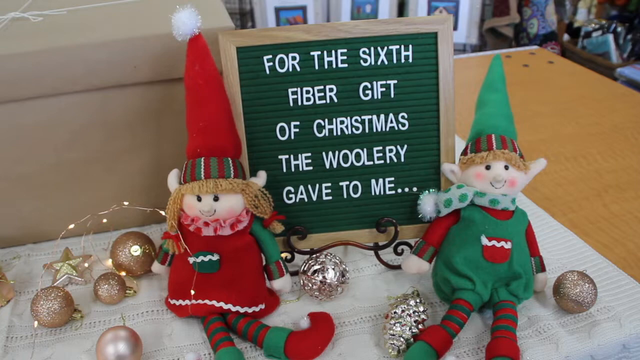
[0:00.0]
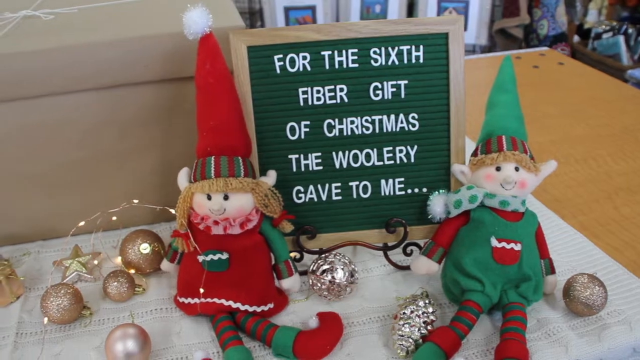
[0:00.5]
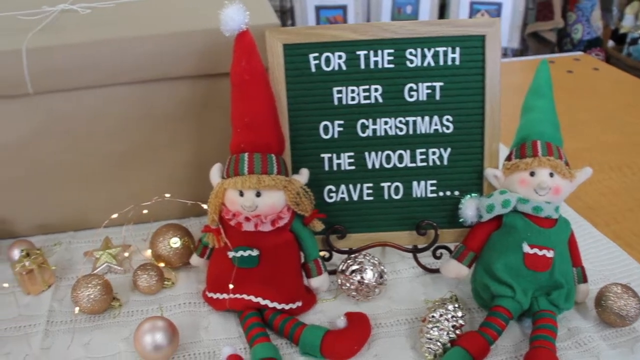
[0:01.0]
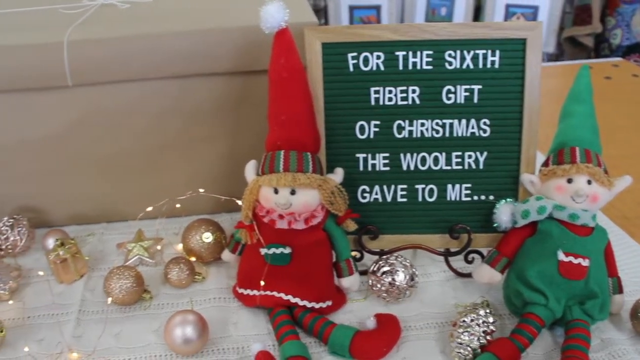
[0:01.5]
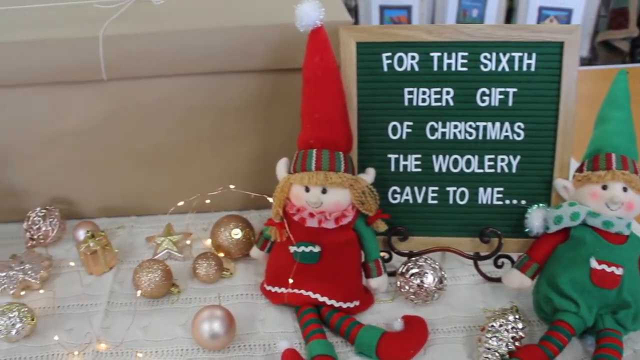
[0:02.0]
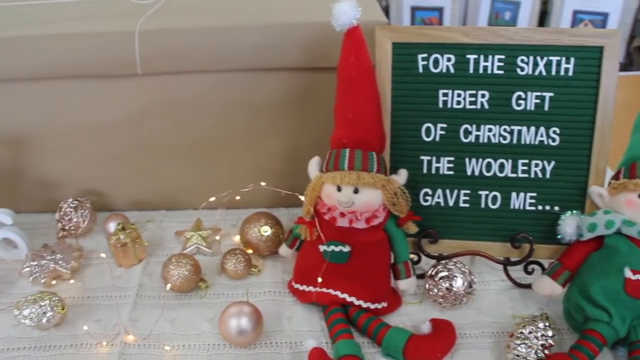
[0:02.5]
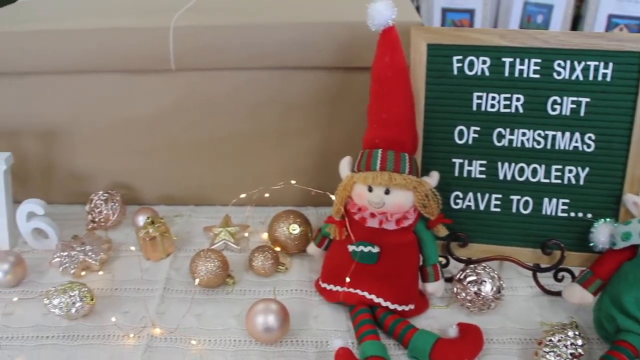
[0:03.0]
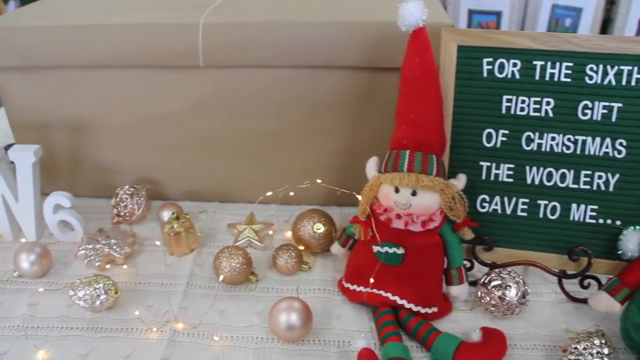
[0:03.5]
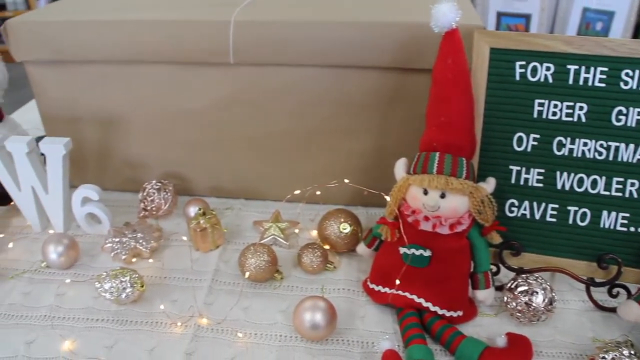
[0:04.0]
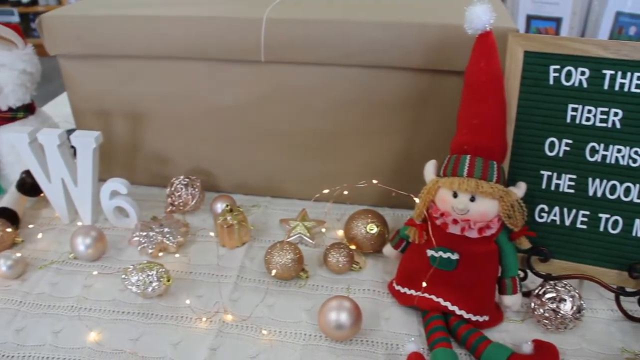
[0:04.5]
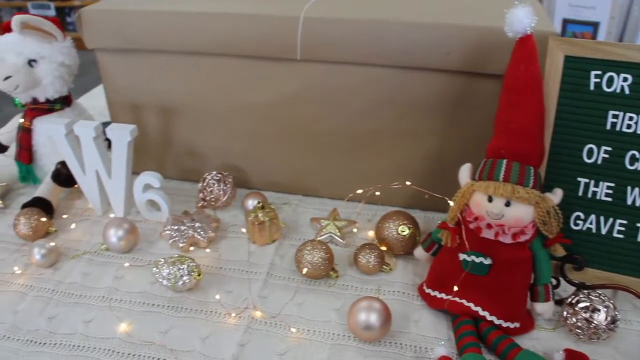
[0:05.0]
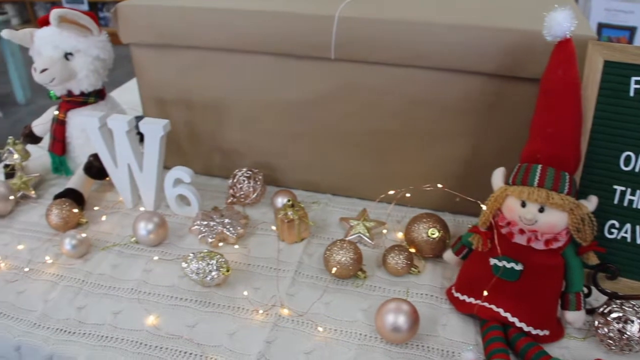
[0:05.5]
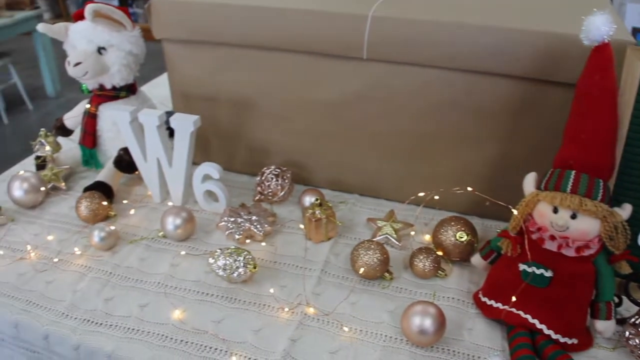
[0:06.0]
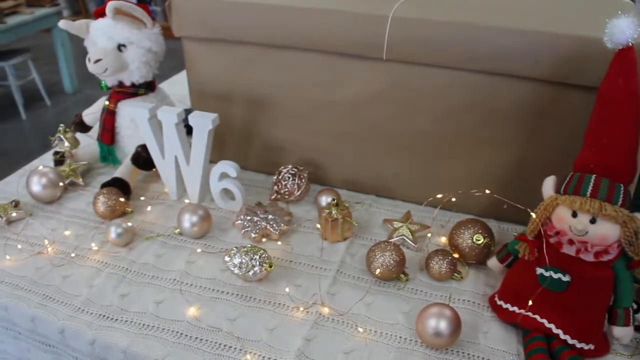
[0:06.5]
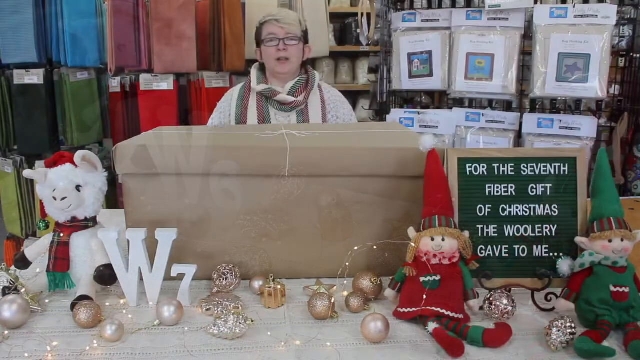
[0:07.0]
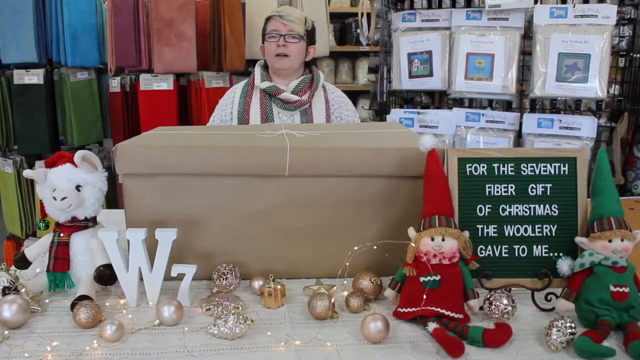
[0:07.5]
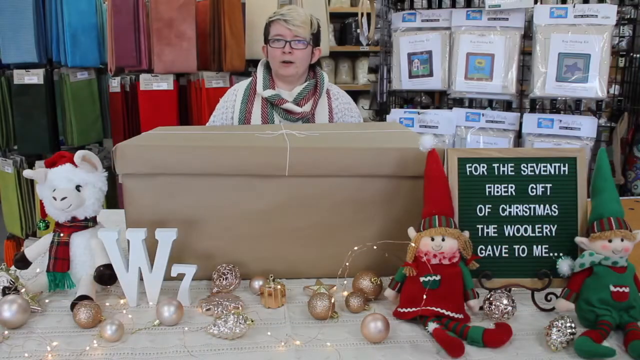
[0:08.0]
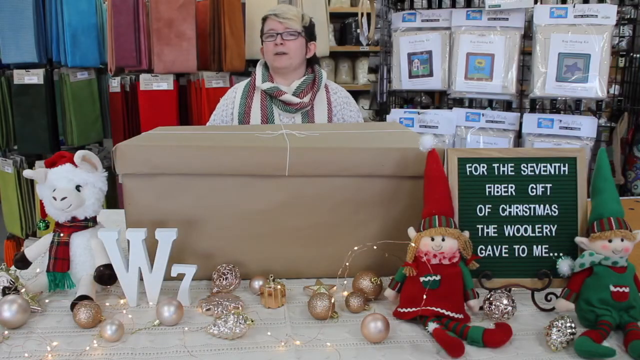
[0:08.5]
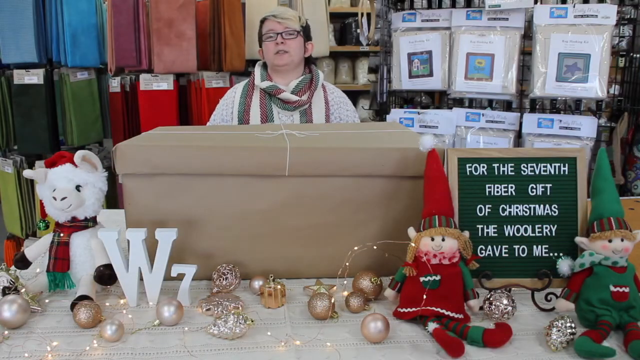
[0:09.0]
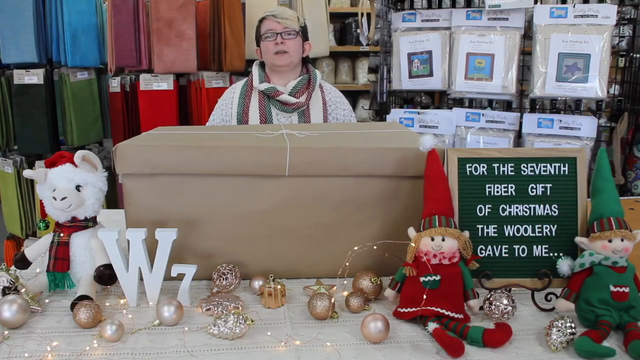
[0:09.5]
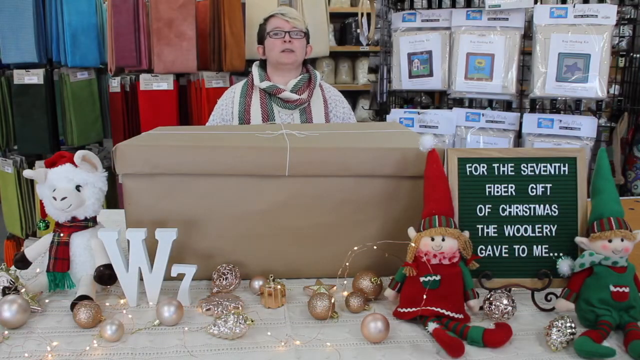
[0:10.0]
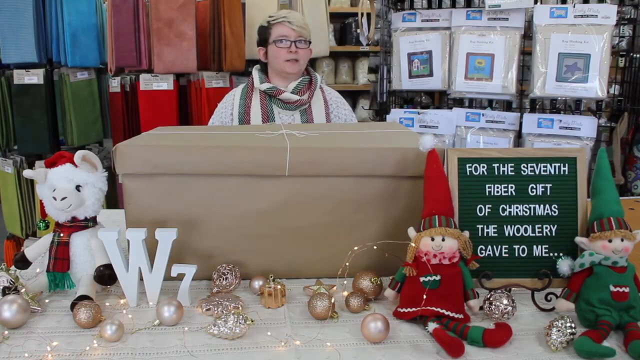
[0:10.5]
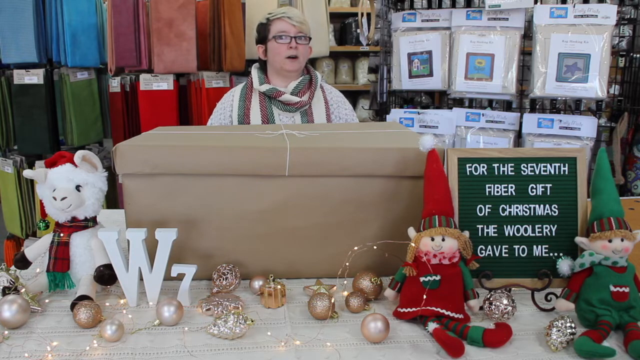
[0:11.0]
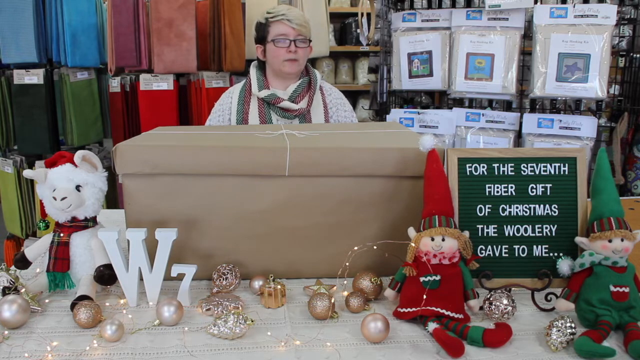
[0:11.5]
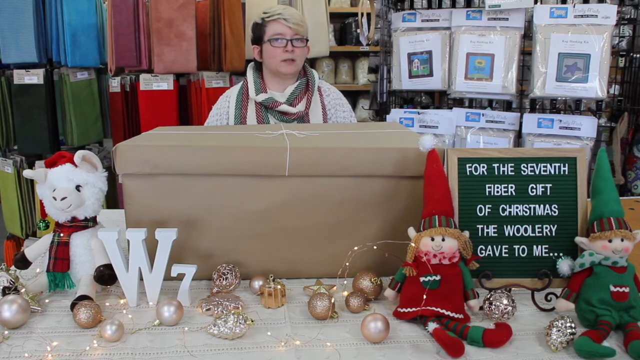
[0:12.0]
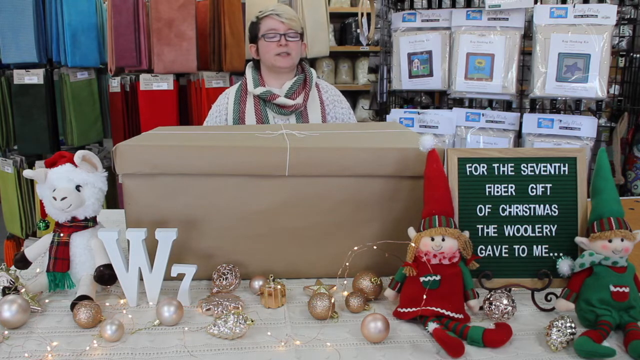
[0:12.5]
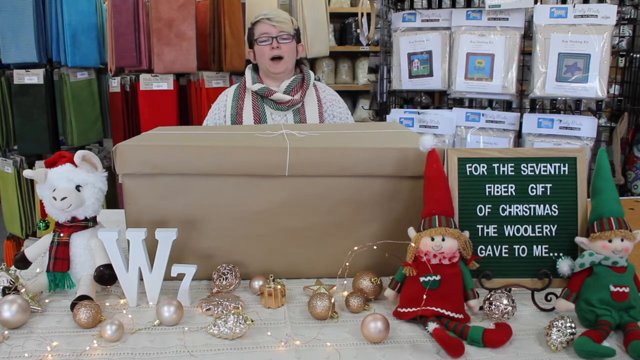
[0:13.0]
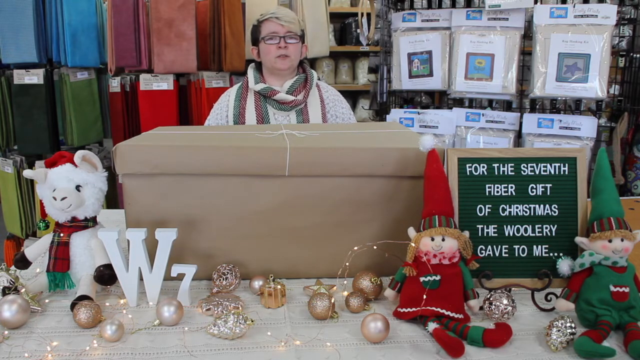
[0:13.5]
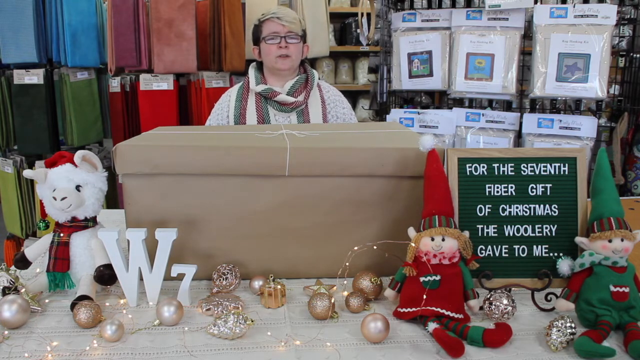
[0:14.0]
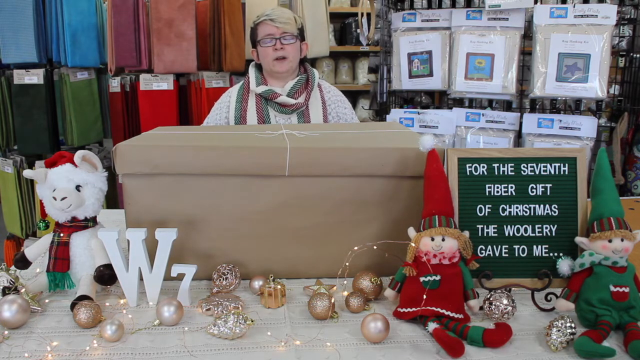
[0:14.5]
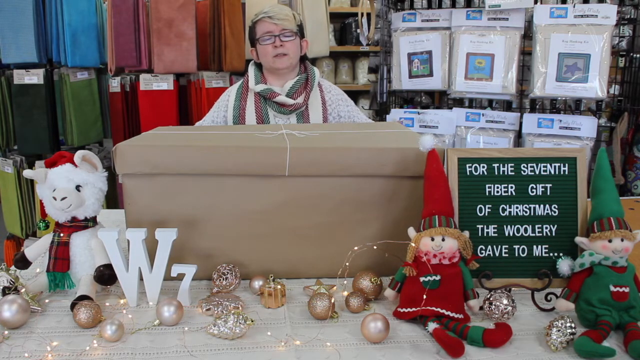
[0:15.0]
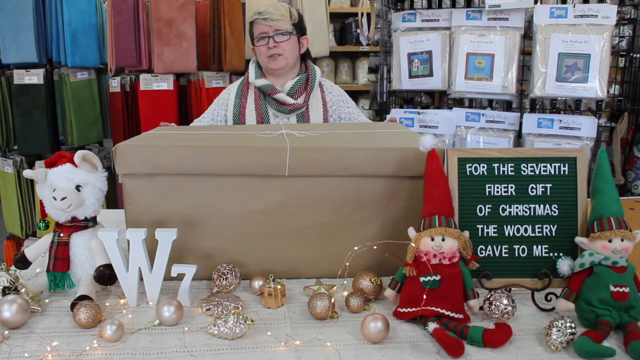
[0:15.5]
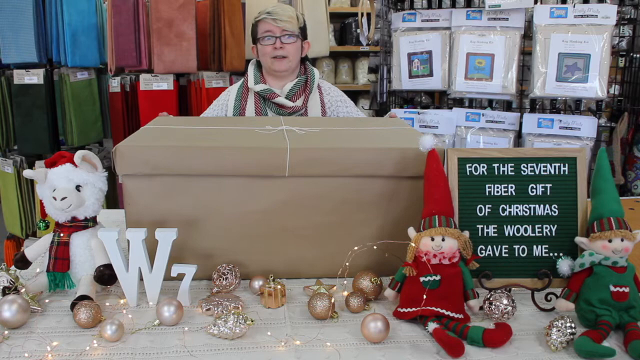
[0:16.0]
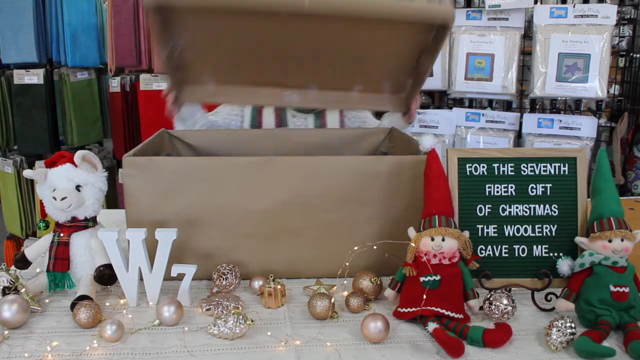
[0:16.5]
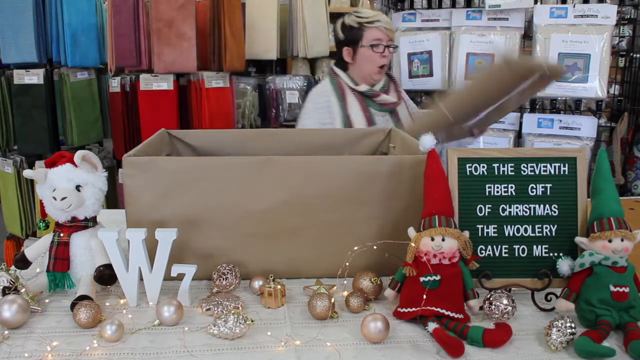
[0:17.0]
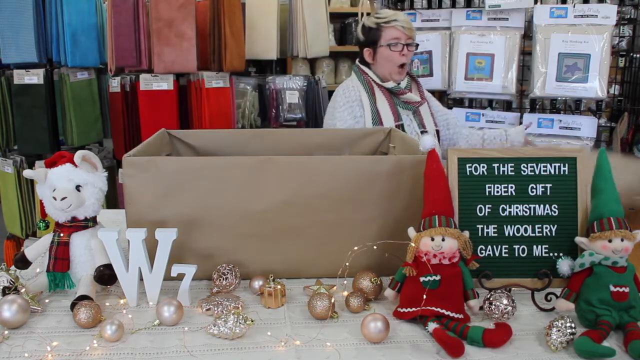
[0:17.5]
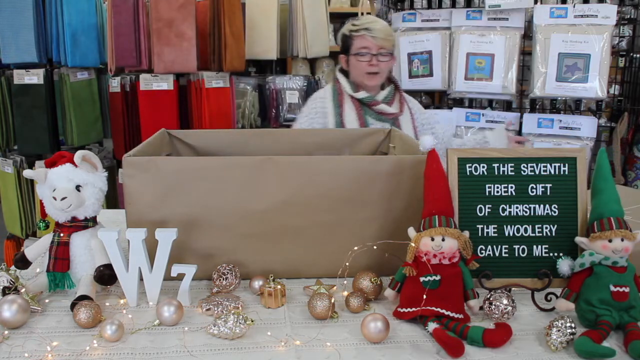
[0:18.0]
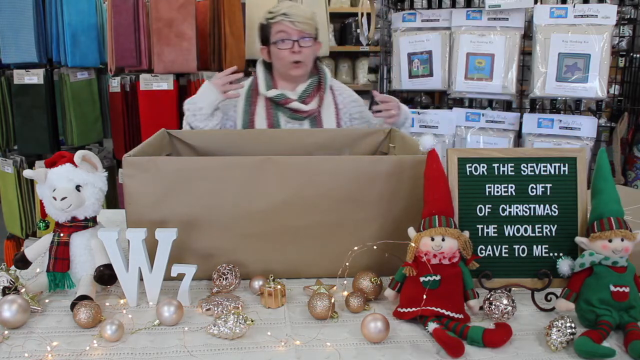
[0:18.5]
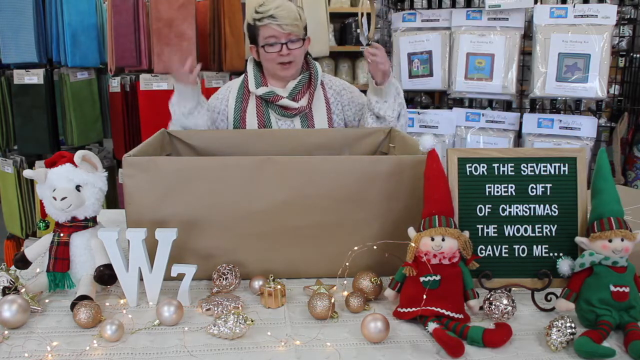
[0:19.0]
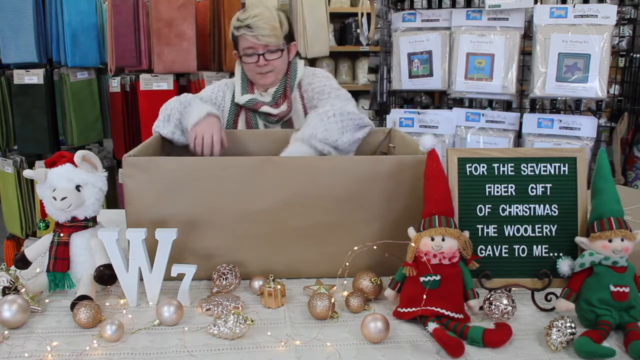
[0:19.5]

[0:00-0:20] Two plush elves are on a shelf. The elf on the left is a female elf with brown hair, wearing a pointy red hat with a white pom-pom on the end, and a red dress with green sleeves. The elf on the right is a male elf wearing a green hat, a white scarf with green polka dots, green overalls and a red shirt. They both sit on either side of a sign with replaceable letters; the sign has a brown wooden frame and a green center with white letters reading "For the sixth fiber gift of Christmas, the Woolery gave to me." The camera pans to the left of the elves, showing some Christmas ornaments on the table, with a W6 in letters on top of the table. The video fades out to a person standing behind a brown box. The person has short brown hair with blonde highlights in front, wears glasses, and wears a white sweater with a green, white and red scarf. They speak to the camera from behind the box, then open the box and pull out a white bag.